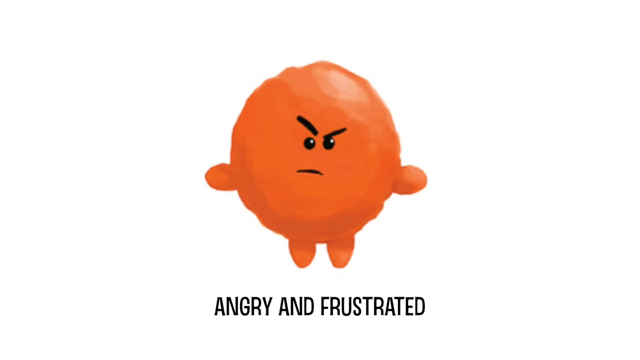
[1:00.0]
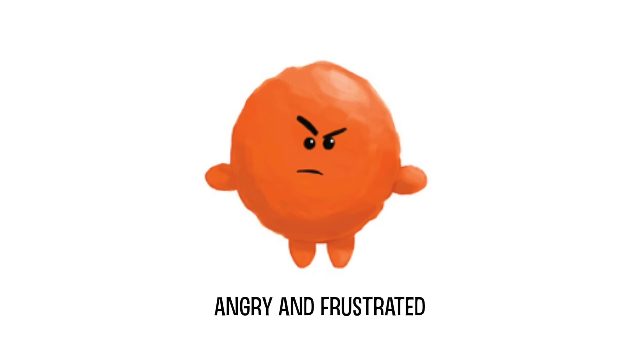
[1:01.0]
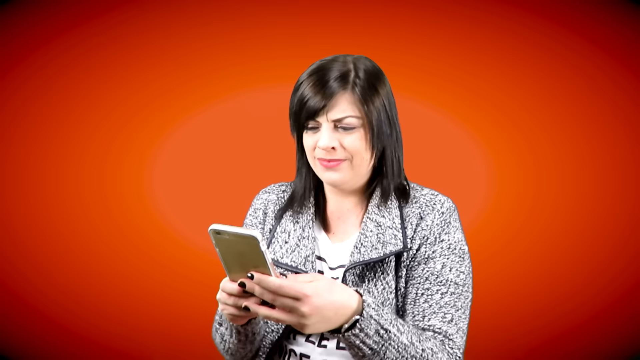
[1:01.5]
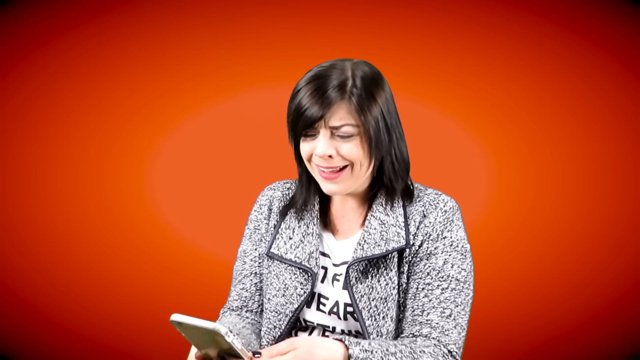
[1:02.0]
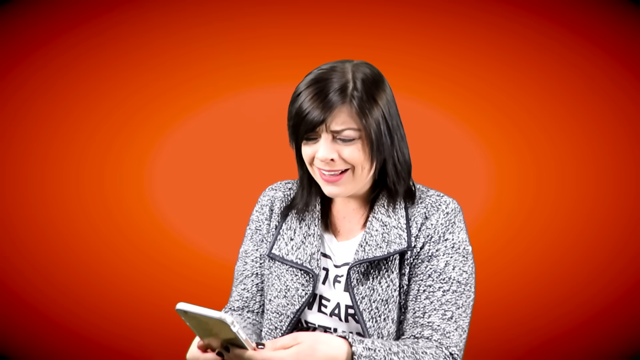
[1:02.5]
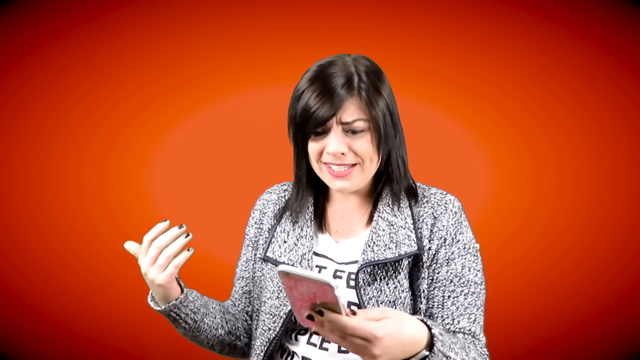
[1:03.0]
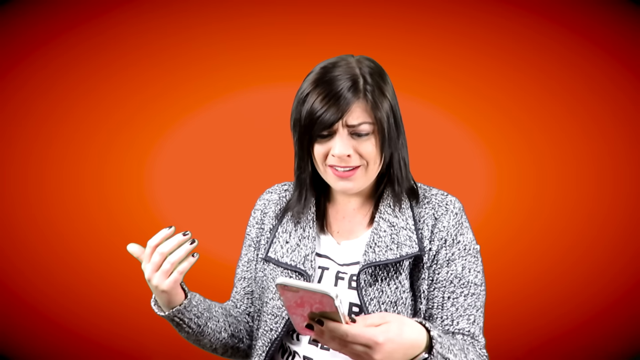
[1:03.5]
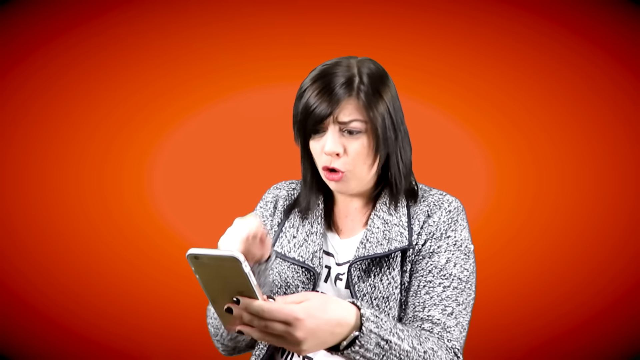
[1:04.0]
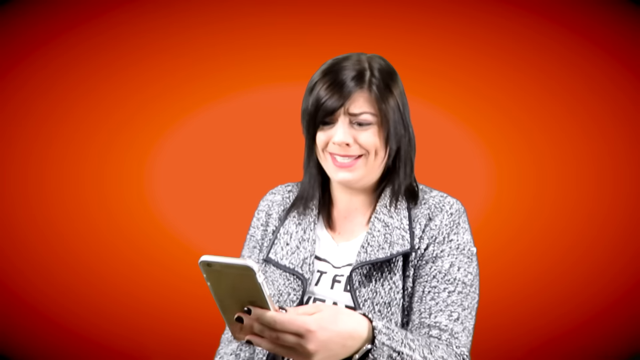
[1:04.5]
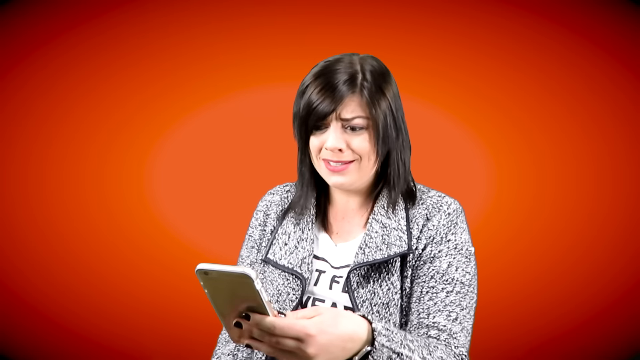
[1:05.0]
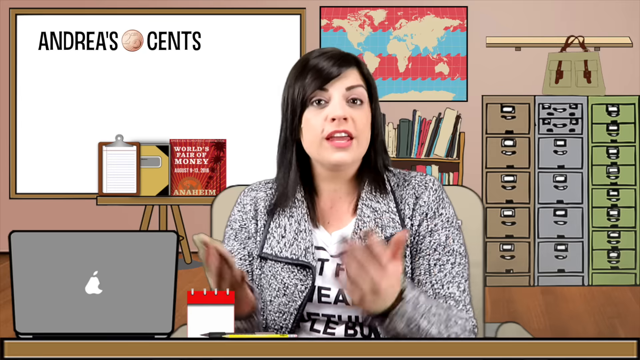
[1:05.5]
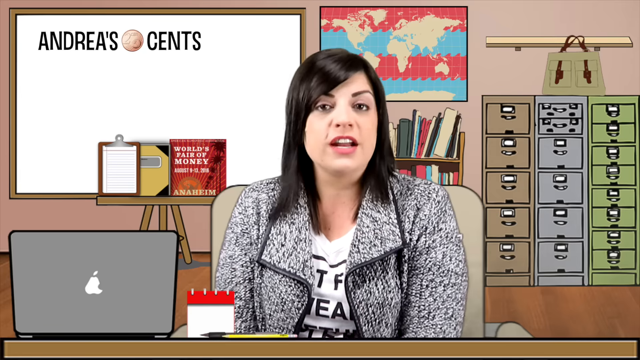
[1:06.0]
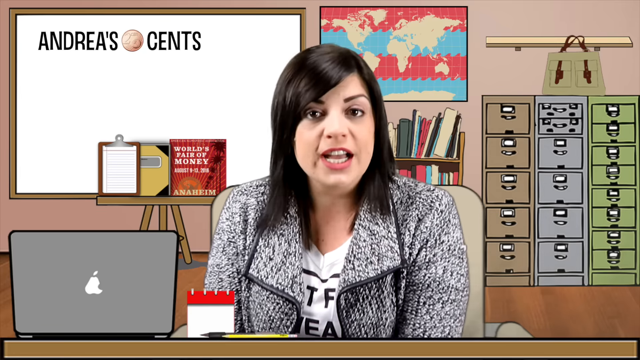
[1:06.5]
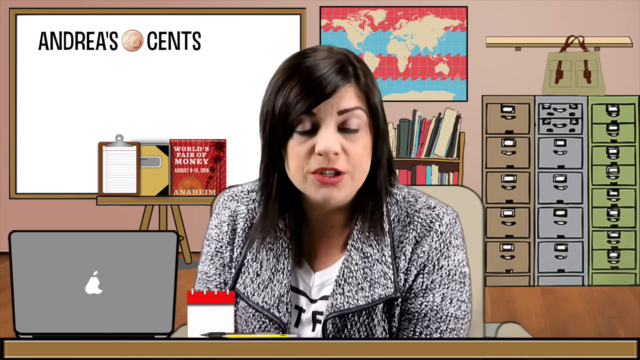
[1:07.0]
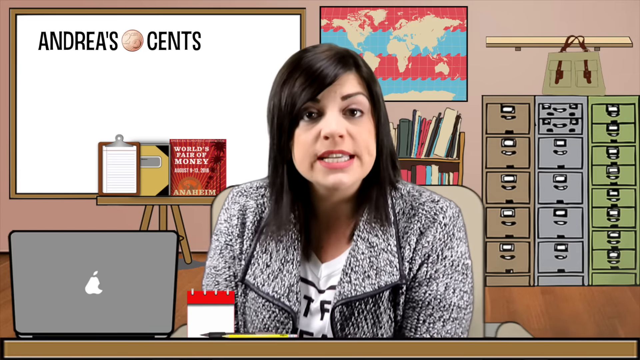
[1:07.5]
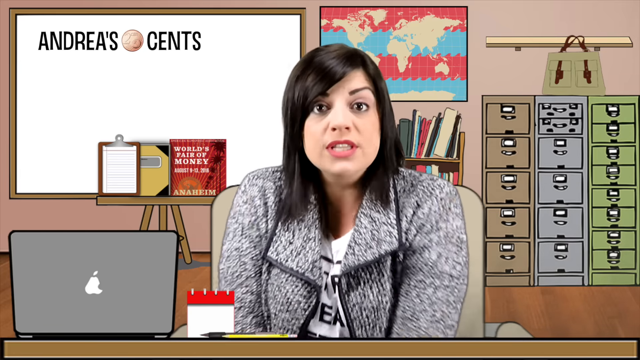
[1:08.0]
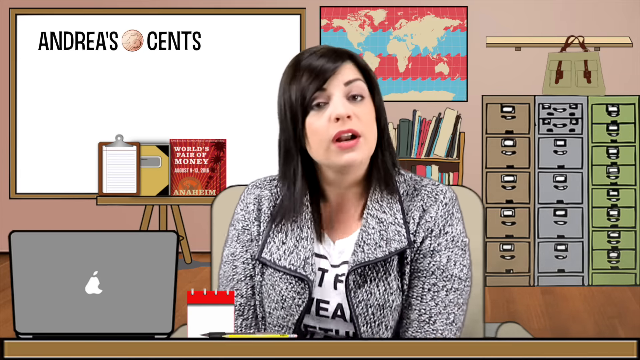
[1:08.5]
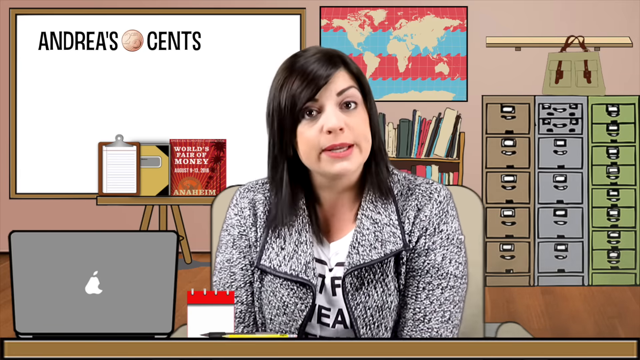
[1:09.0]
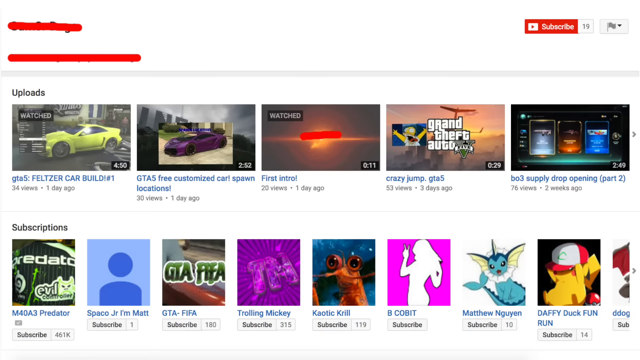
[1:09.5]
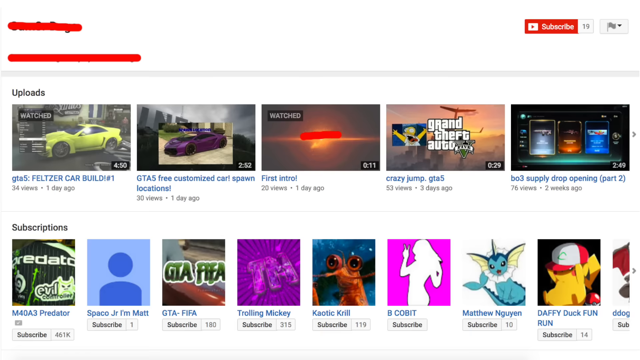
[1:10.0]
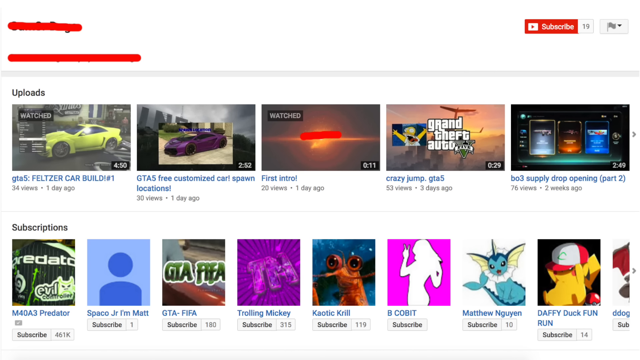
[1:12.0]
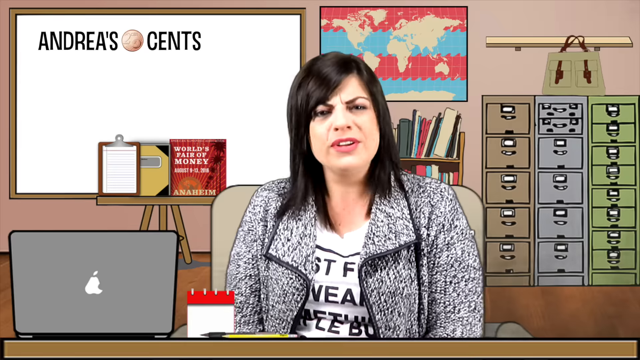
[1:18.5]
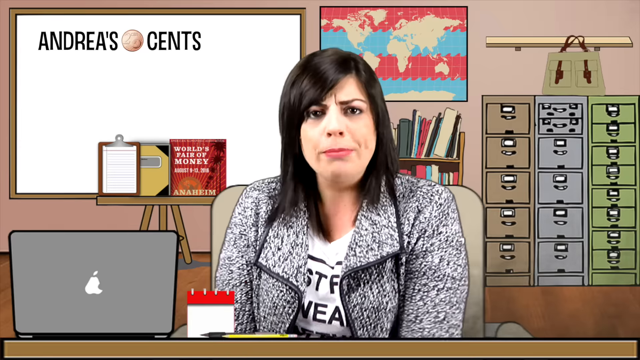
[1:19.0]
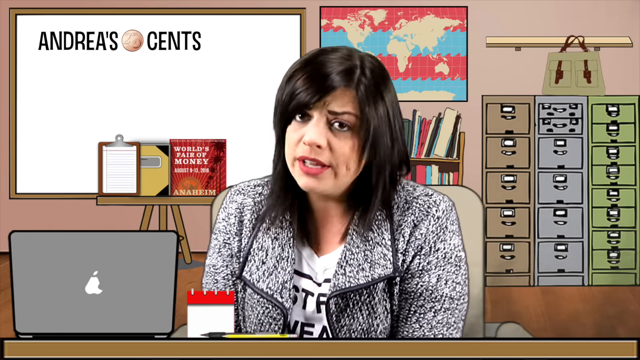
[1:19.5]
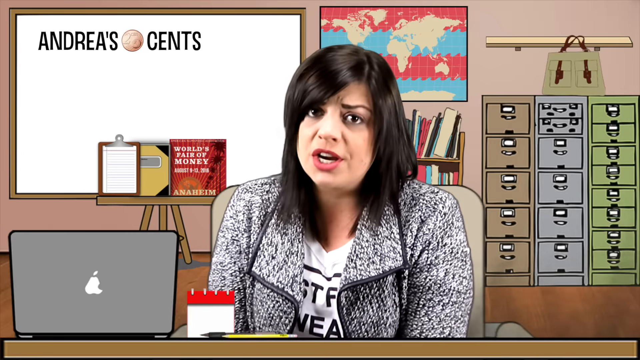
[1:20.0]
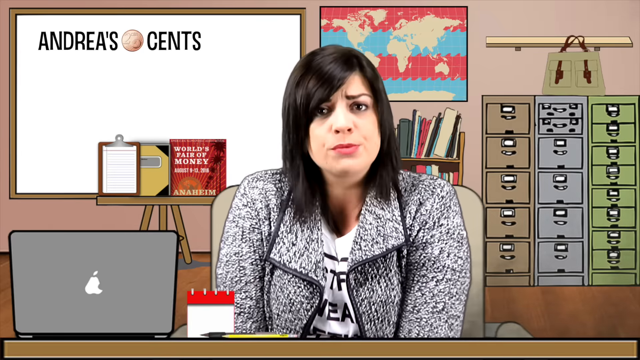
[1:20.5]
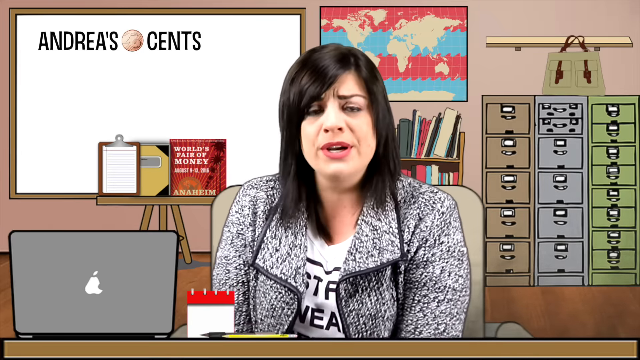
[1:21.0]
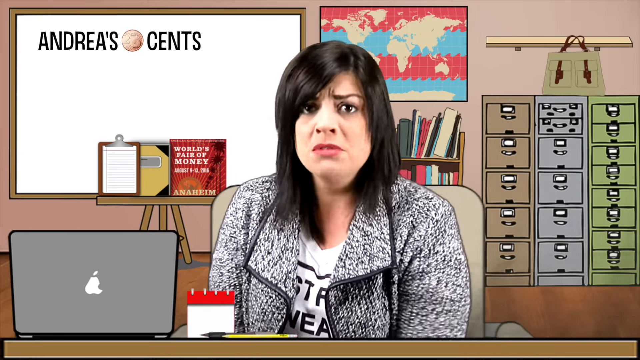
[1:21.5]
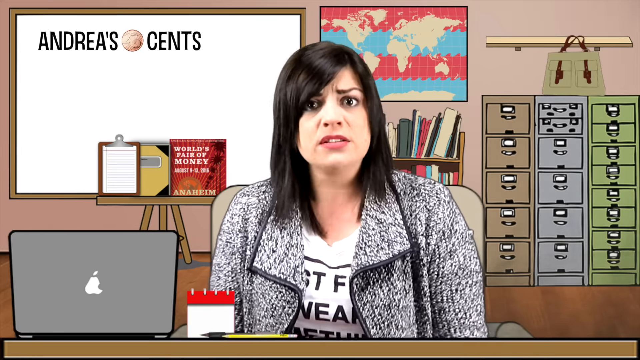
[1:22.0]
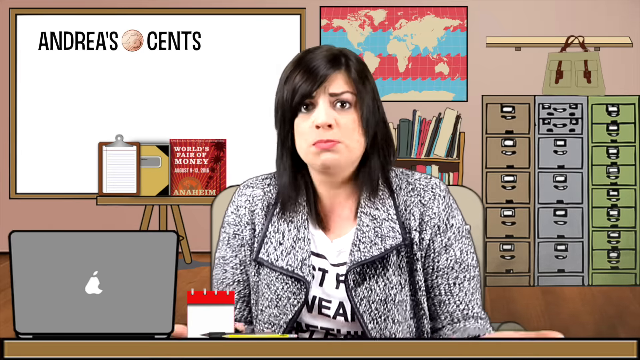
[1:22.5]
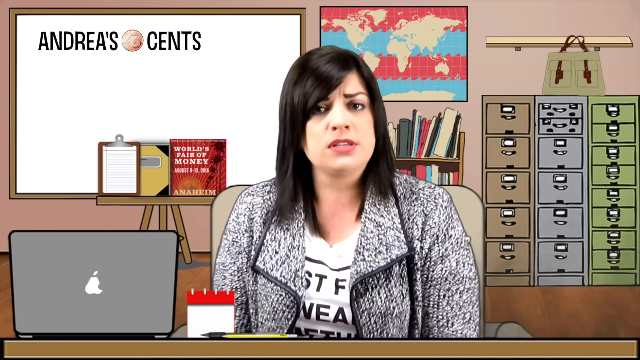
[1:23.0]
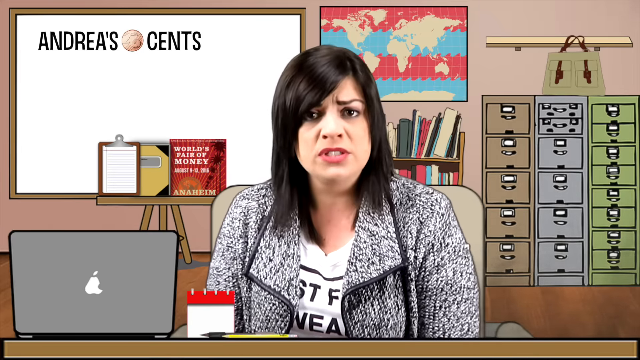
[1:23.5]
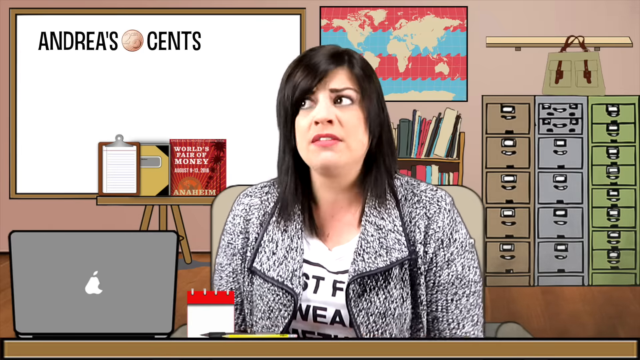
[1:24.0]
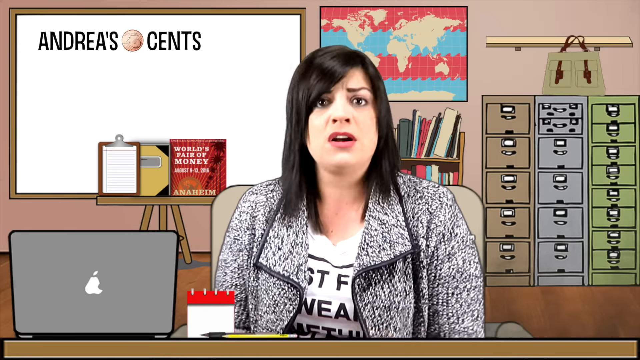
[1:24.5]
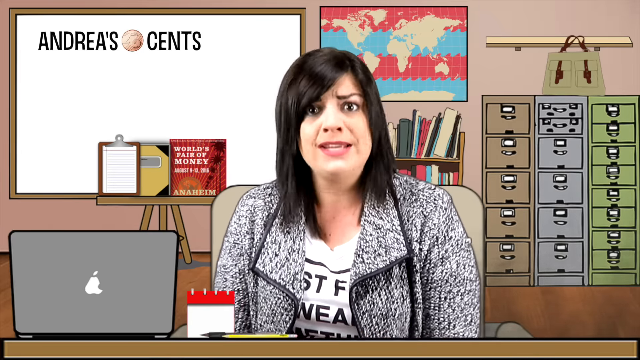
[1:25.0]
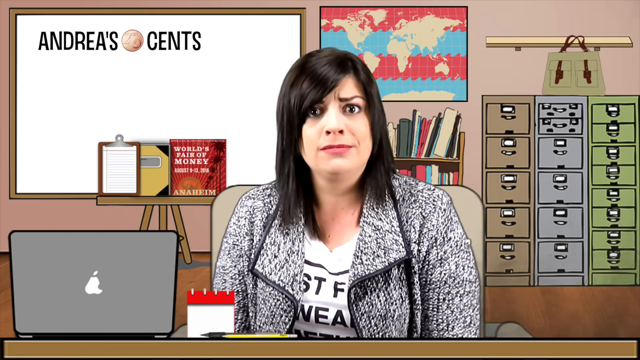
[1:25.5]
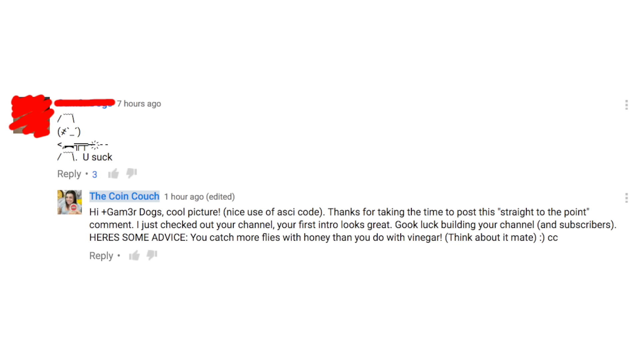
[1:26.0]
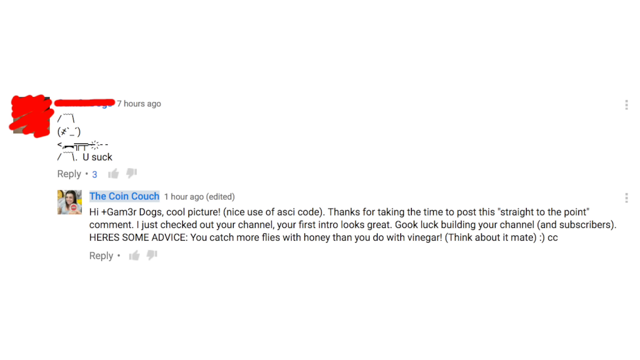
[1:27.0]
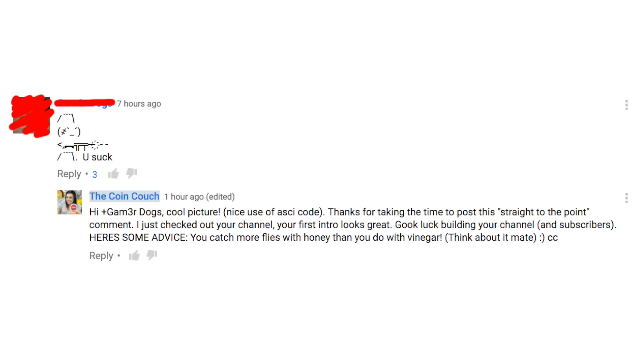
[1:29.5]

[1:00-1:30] Another animated emoji appears on a white background; this one is orange and angry, the emojis changing only in colour and facial expression. The text below it says "angry and frustrated." Andrea then appears against an orange background, reflecting the colour of the emoji, still talking and pointing towards her cell phone. She is then seen in her office talking to the viewer. A YouTube channel page is shown with 19 subscribers; the channel's name and date are hidden with a red line. There are upload and subscription sections. Under uploads are mobile game videos: "GTA 5 Car Build," "GTA 5 Free Customized Car Spawn Locations," "Best Intro," "Crazy Jump GTA 5" and "B03 Supply Drop Opening." Under subscriptions at the bottom are channels with fewer subscribers, the first being "Pre-Data Channel," followed by several others. The channels and the uploads are displayed in rows. Andrea is shown, and then a comment under the first comment appears, from "TheCoinCouch," saying "Hi Gam3rDogs, cool picture, nice use of ASCII code. Thanks for taking the time to post straight to the point comment. I just checked out your channel. Your first intro looked great, good luck building your channel and subscribers. Here's some advice. You catch more flies with honey than you do with vinegar. Think about it mate."